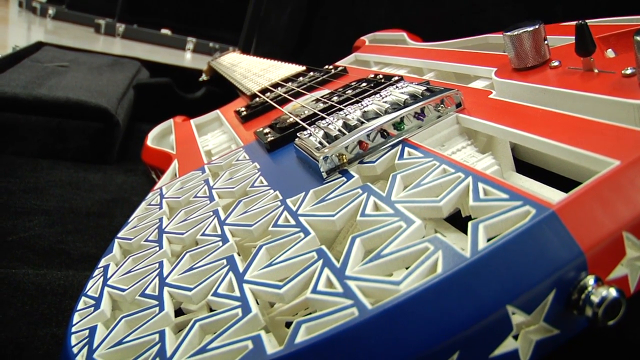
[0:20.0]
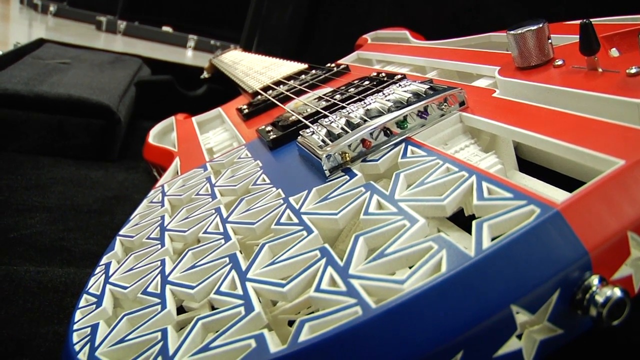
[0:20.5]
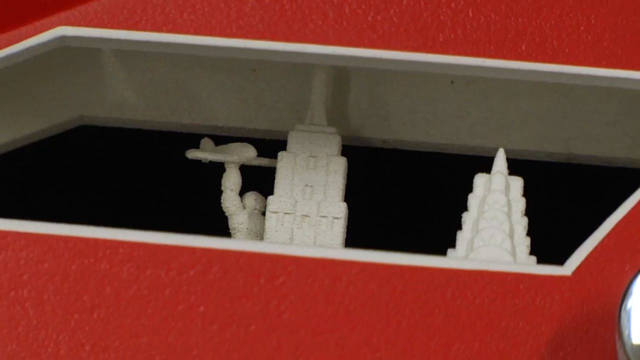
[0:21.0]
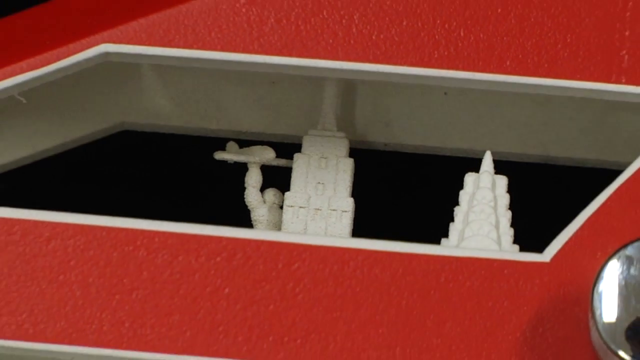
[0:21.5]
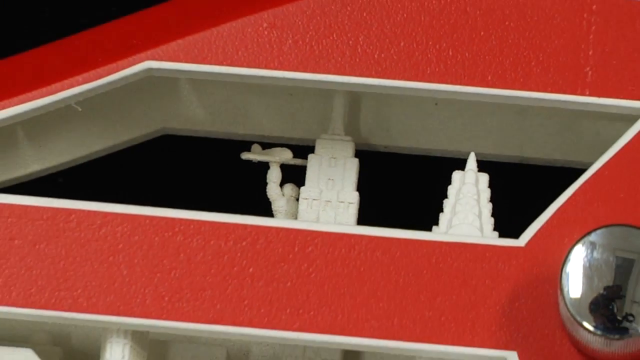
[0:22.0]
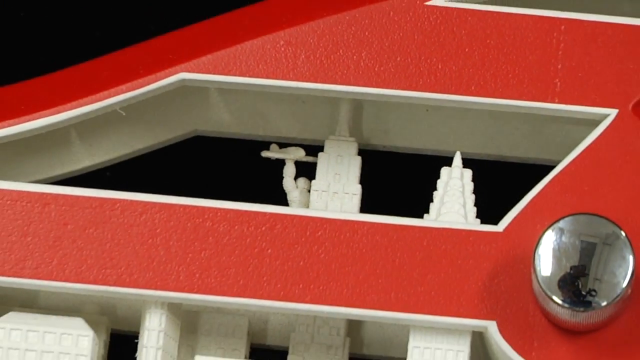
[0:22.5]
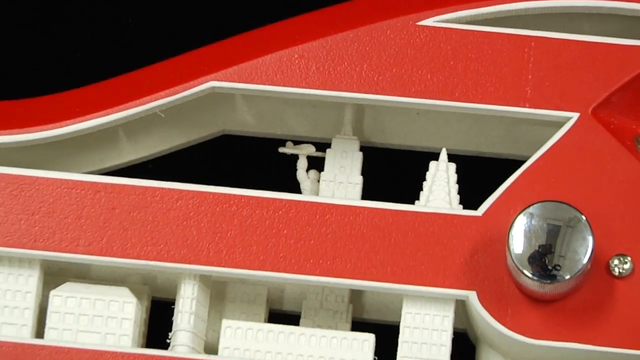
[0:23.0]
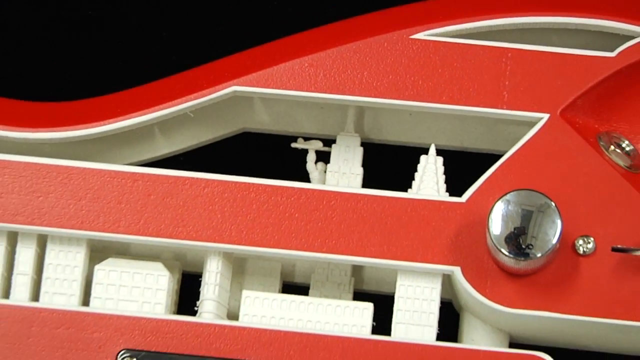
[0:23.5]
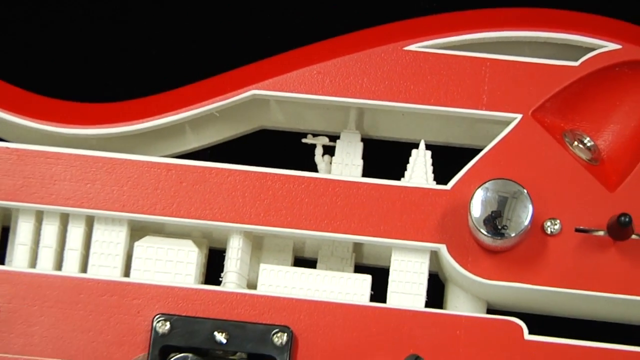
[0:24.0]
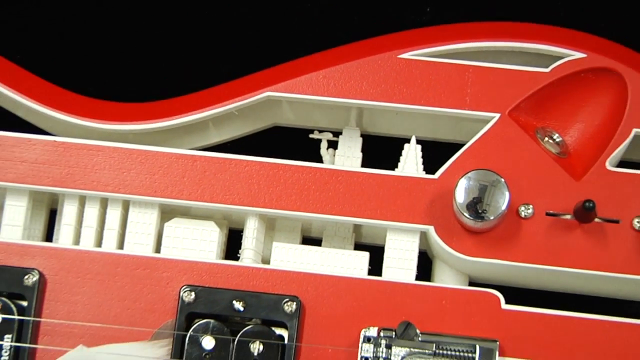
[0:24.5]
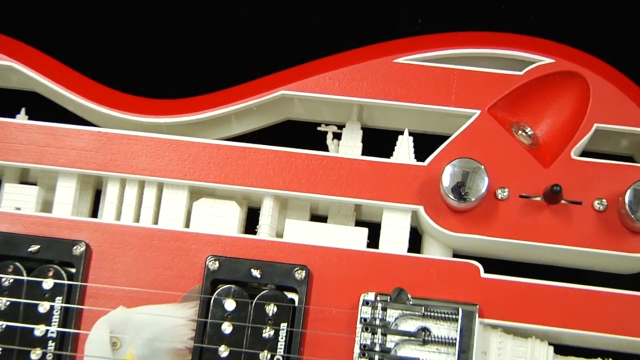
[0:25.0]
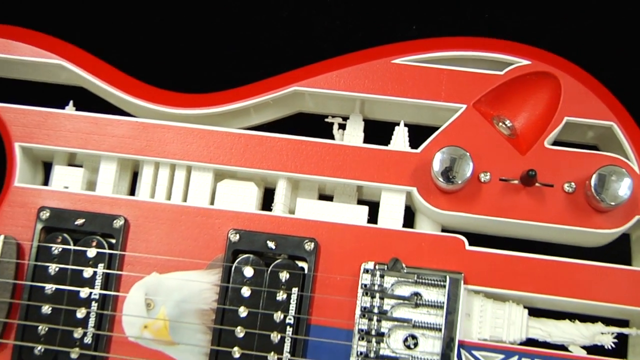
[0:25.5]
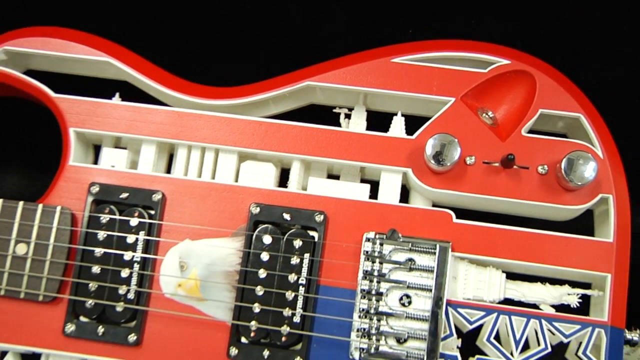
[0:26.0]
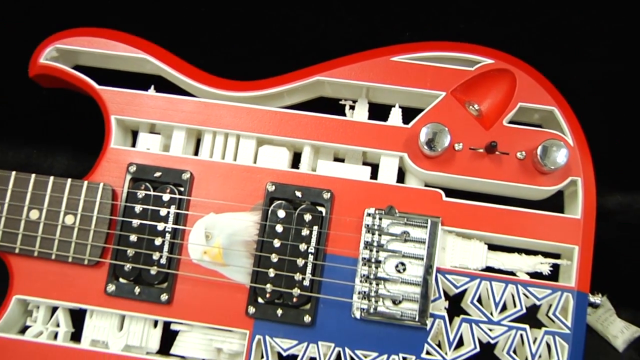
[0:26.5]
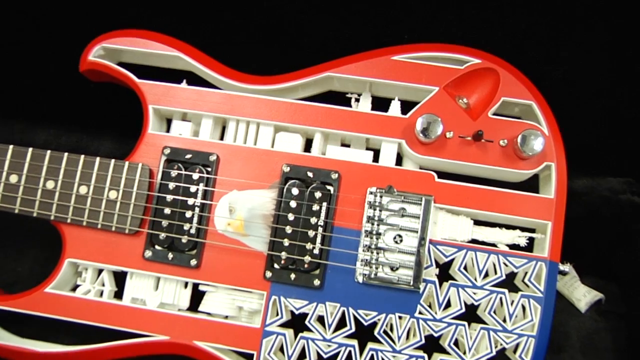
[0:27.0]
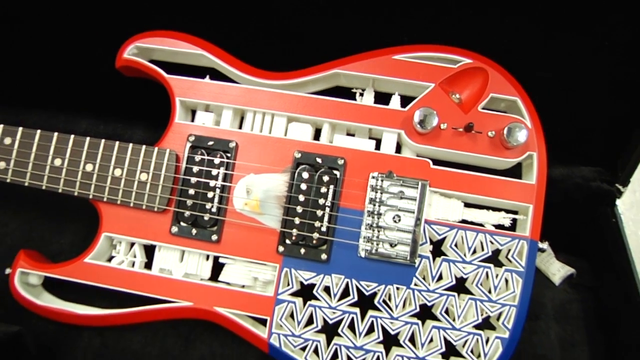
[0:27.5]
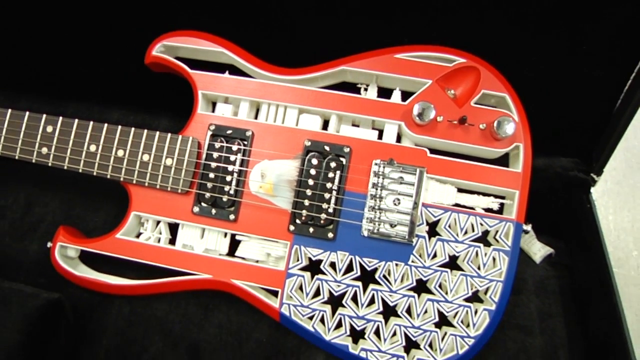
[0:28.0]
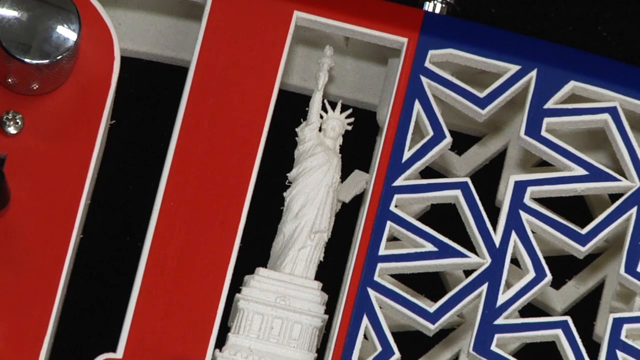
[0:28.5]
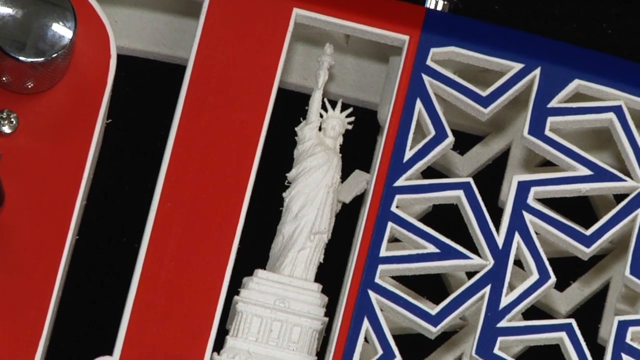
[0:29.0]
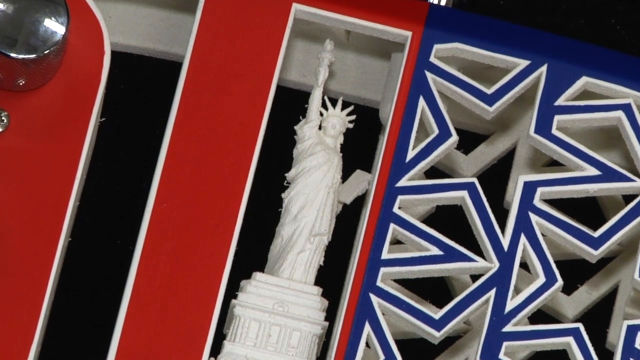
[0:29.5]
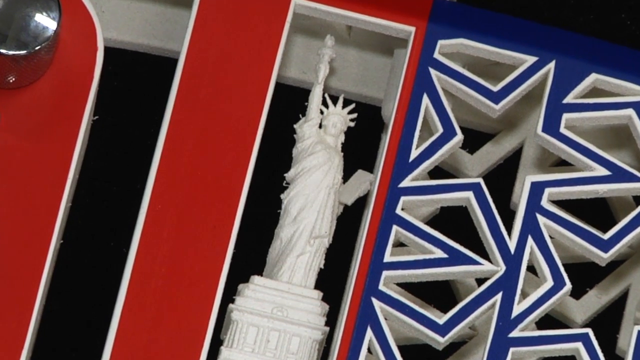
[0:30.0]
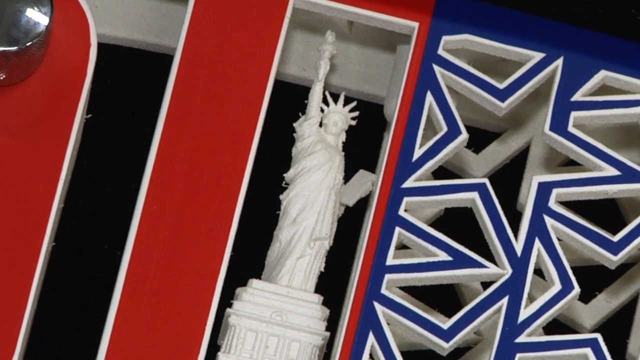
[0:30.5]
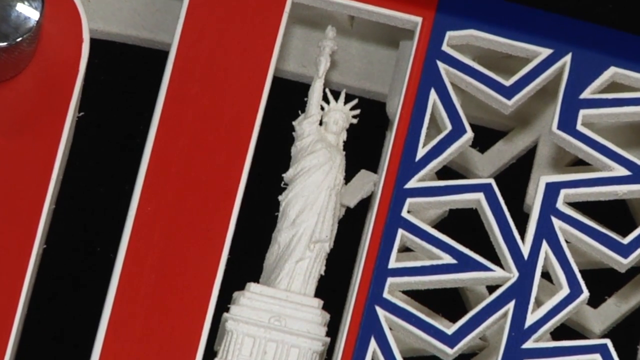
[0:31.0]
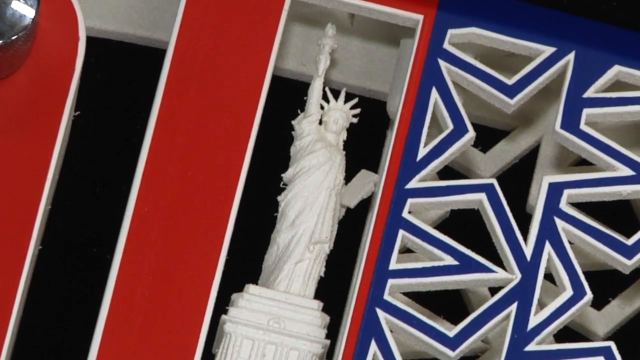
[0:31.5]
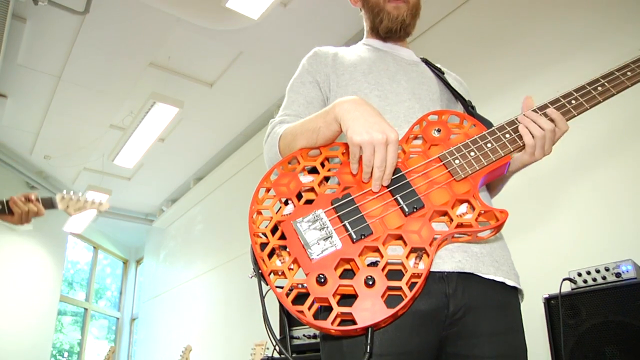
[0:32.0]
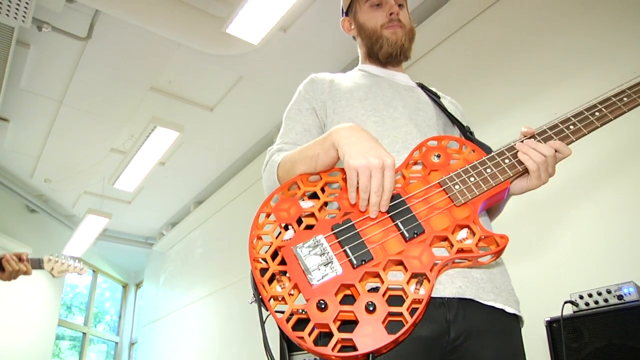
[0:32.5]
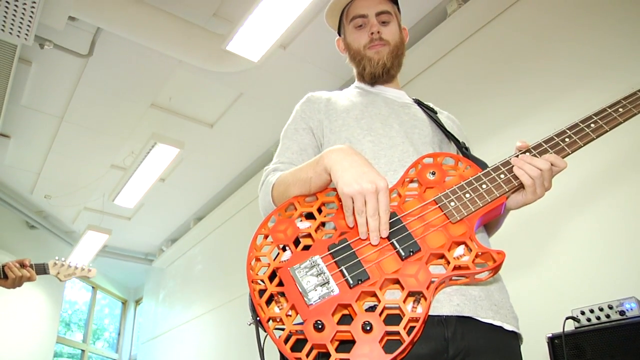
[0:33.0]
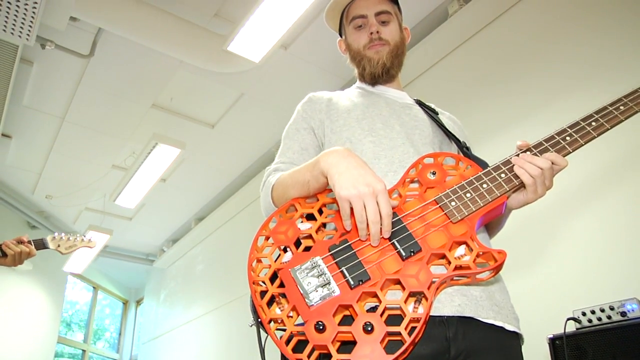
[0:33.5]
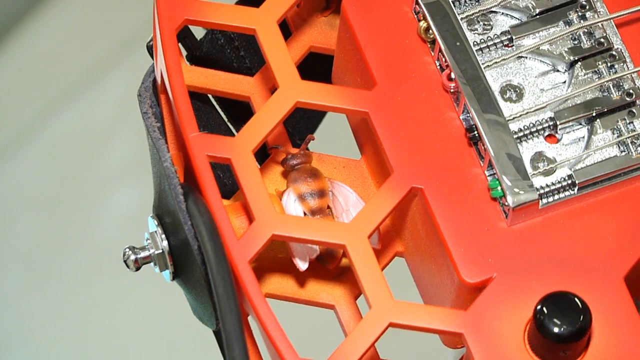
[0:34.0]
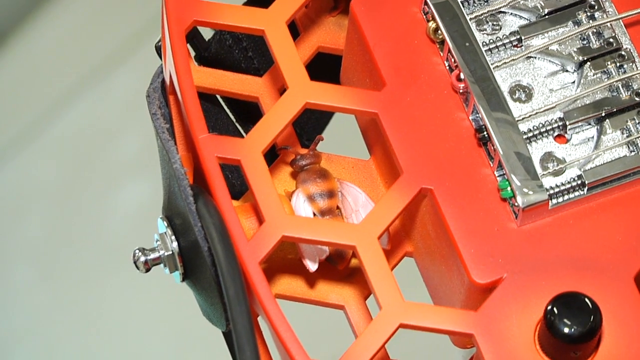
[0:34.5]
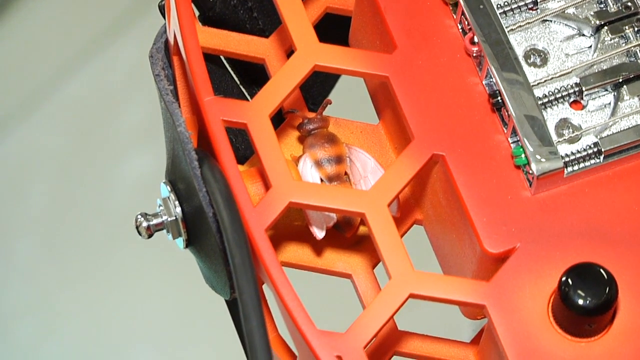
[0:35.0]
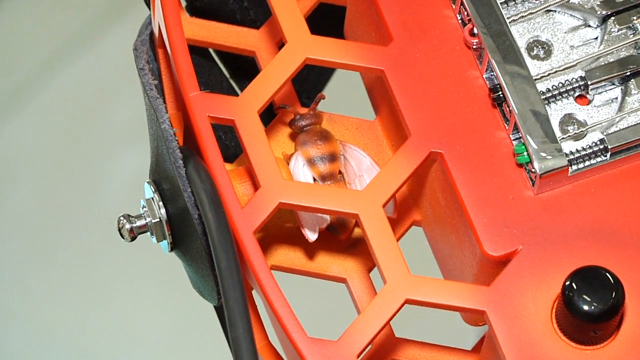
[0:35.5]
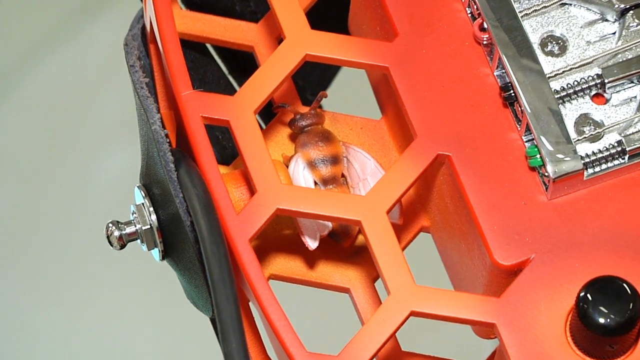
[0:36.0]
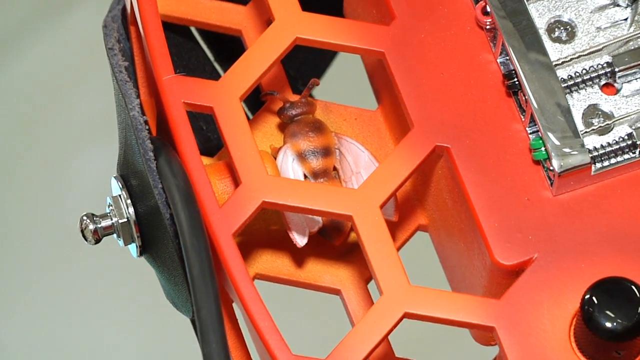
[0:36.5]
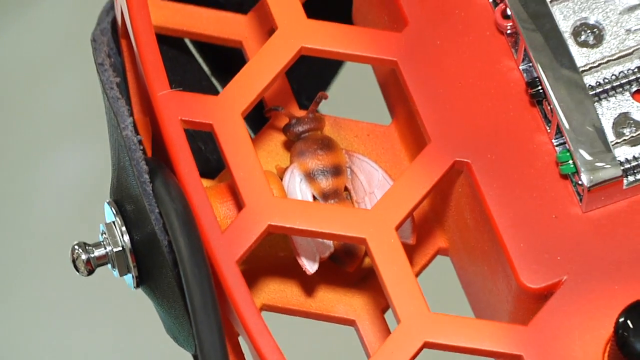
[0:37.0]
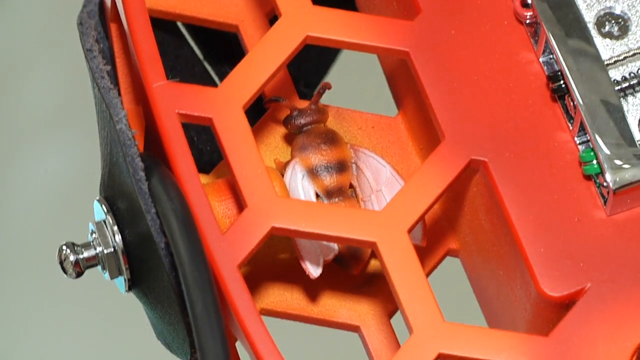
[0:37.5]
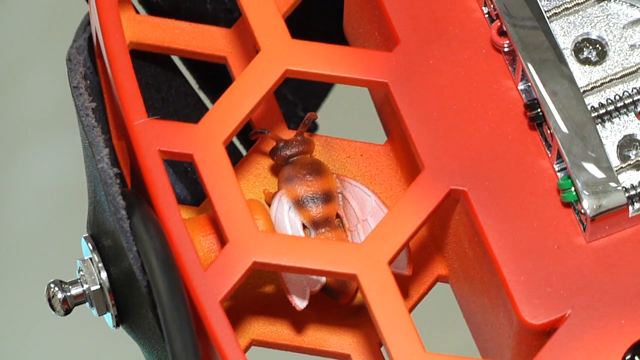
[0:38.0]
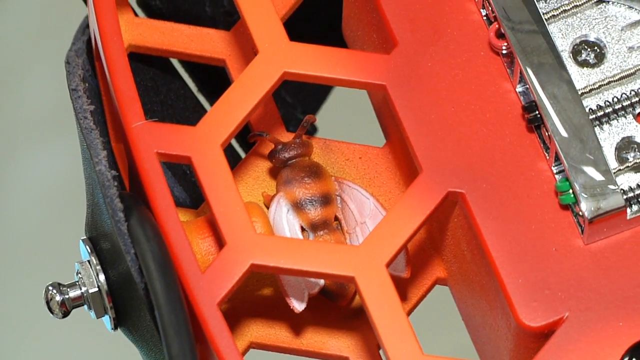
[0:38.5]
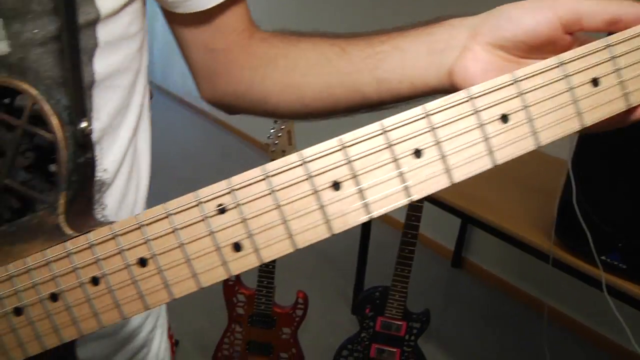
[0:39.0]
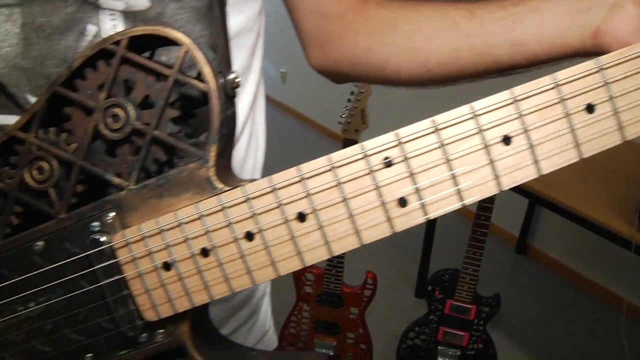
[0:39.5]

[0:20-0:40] A red, white and blue guitar with the hole design is shown, first briefly and then in a better shot: it is a representation of the United States flag, with the Statue of Liberty kind of in between the grooves, an eagle, and what looks like a replica of possibly the White House. No one is playing it; it is just displayed. Another guitar design appears quickly and looks like it might have some type of beetle inside it. The guitarist from the band is seen for a second playing, followed by a close-up of that same guitar, which looks like it has some kind of fake bug inside. Another rather colorful guitar, with a black and maybe copper design, is shown briefly.